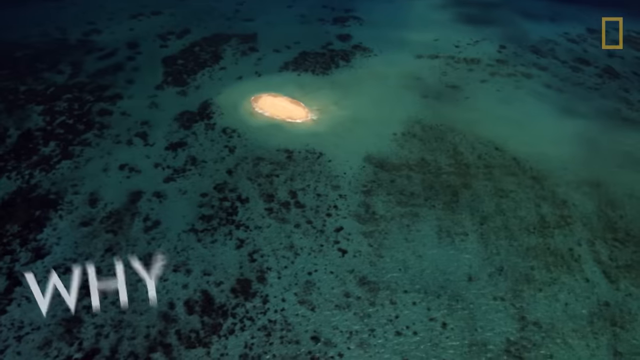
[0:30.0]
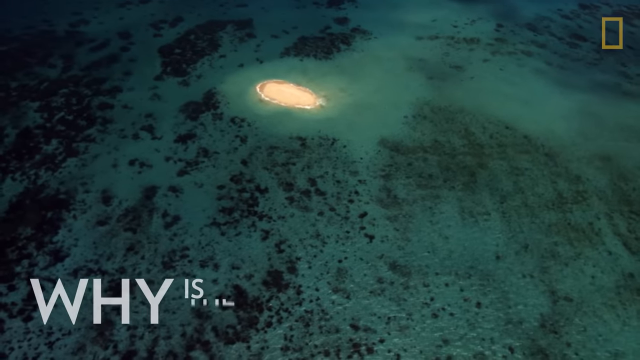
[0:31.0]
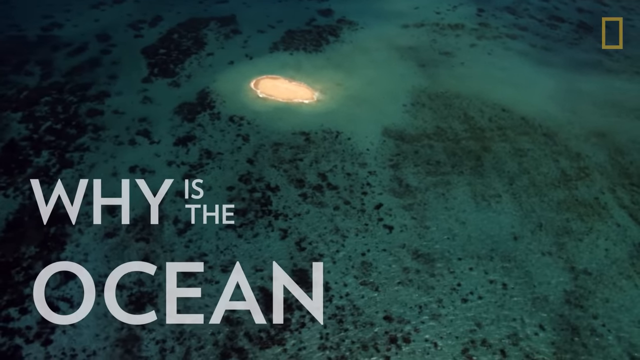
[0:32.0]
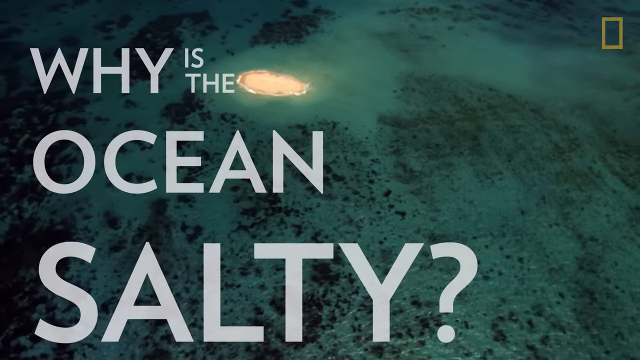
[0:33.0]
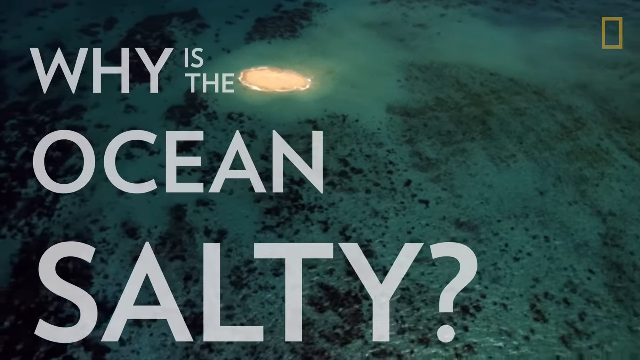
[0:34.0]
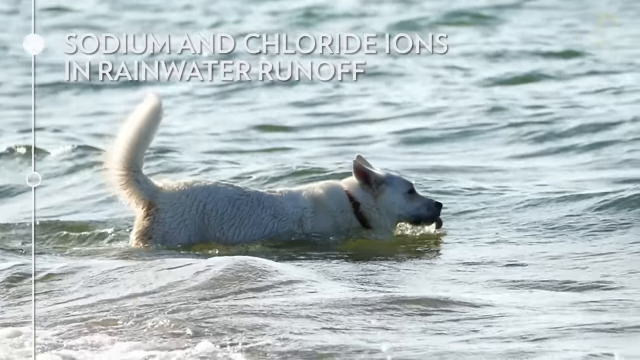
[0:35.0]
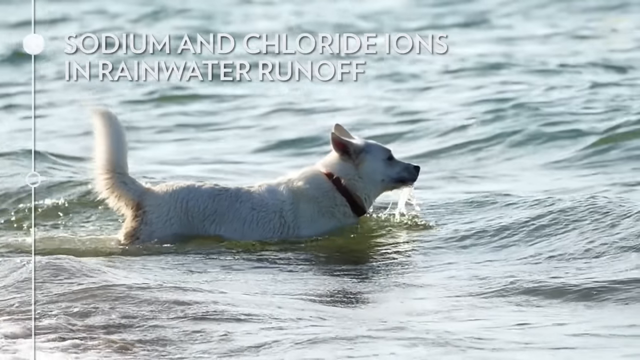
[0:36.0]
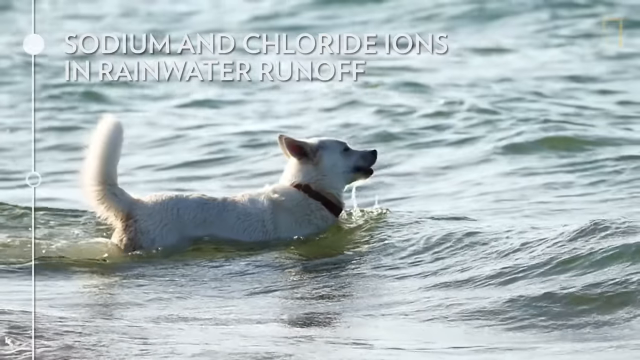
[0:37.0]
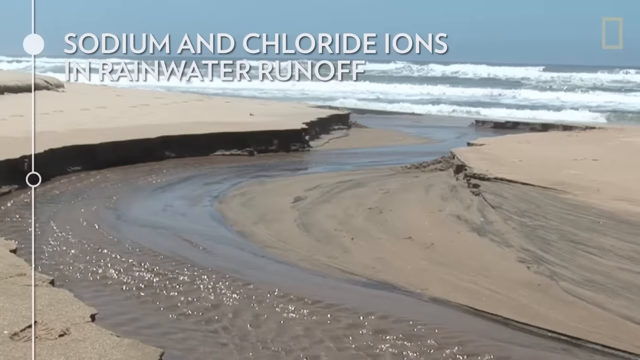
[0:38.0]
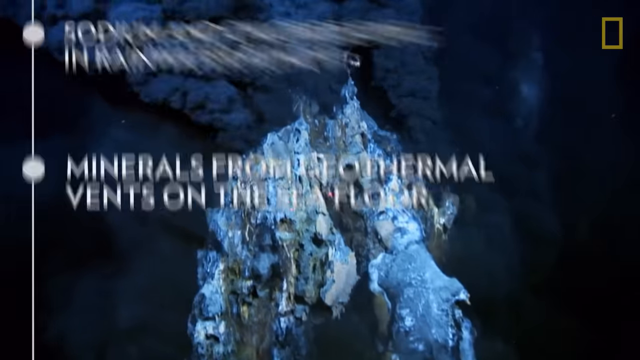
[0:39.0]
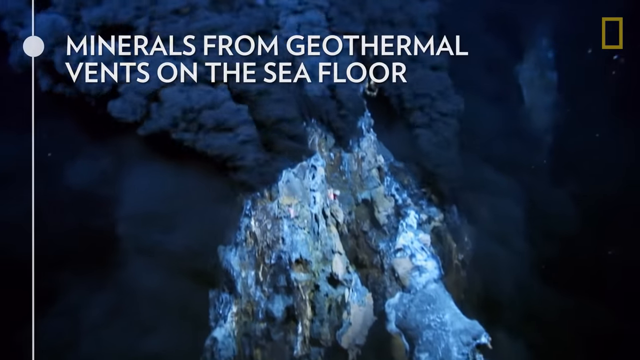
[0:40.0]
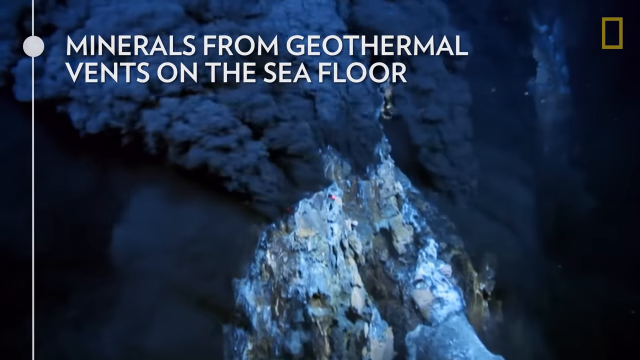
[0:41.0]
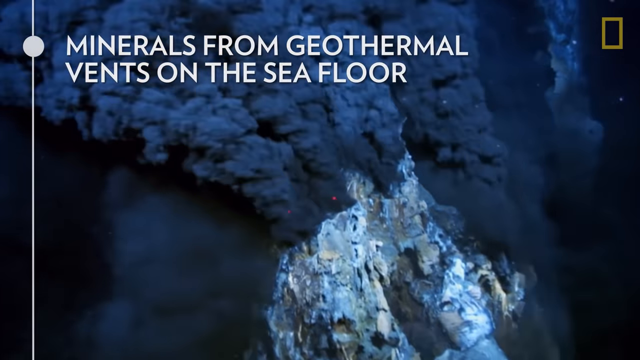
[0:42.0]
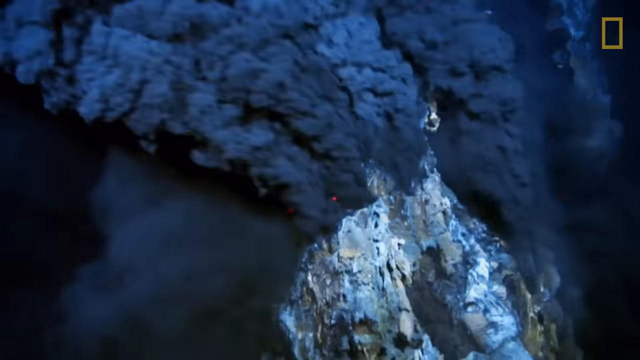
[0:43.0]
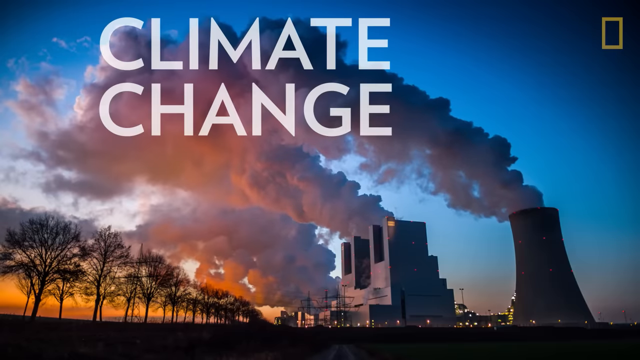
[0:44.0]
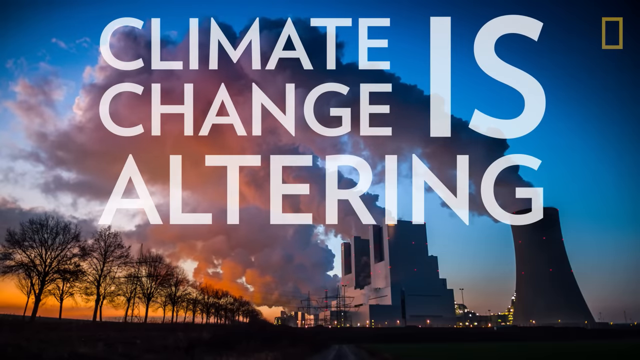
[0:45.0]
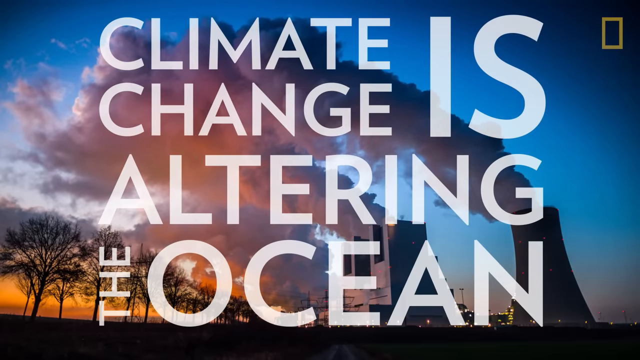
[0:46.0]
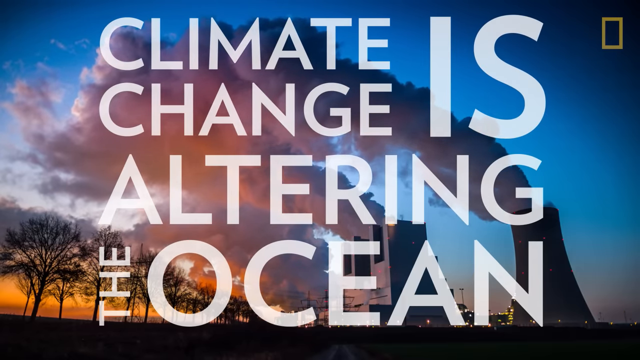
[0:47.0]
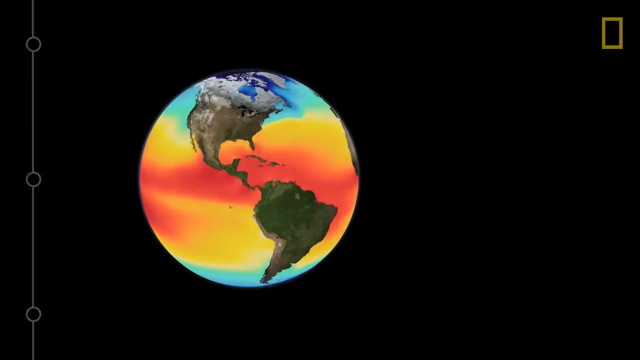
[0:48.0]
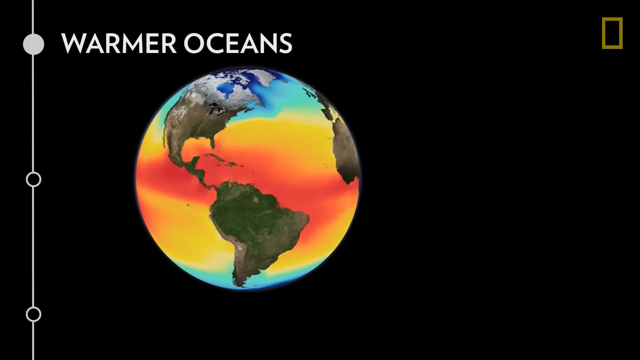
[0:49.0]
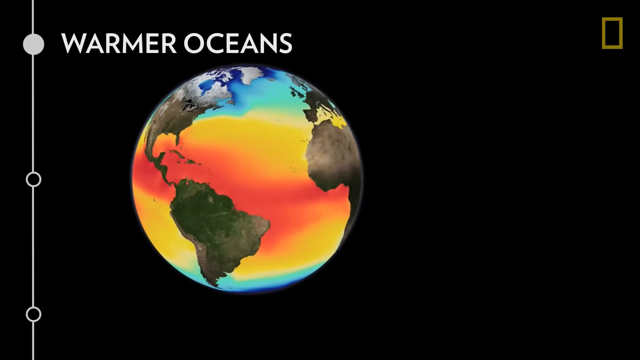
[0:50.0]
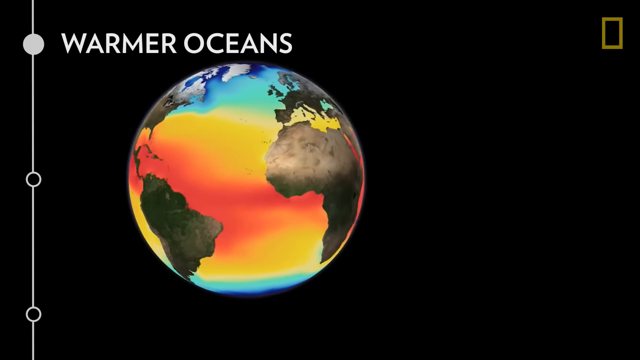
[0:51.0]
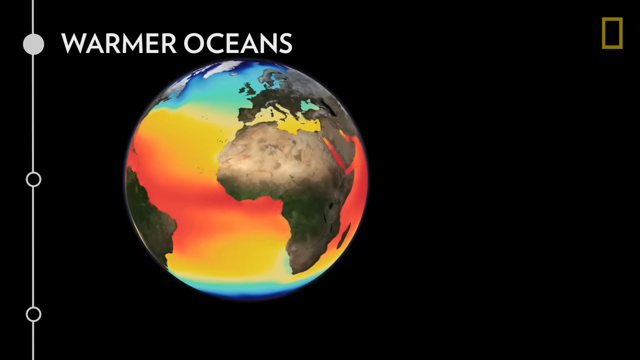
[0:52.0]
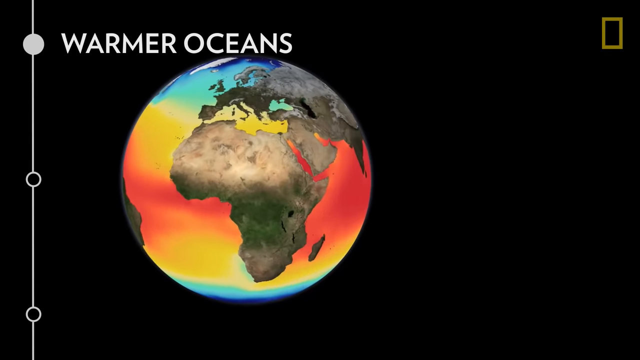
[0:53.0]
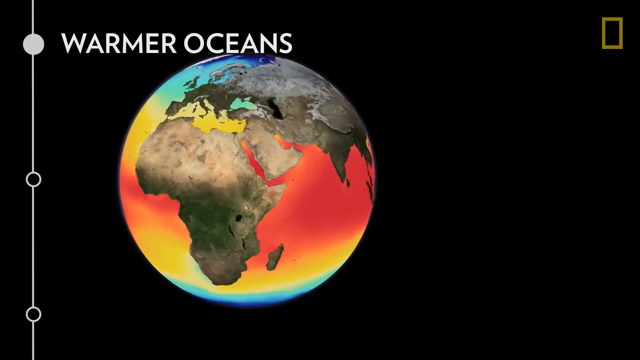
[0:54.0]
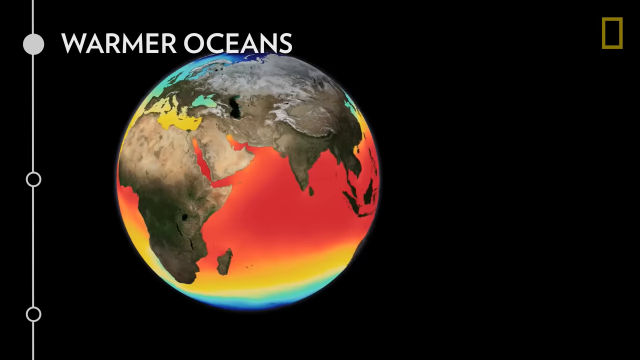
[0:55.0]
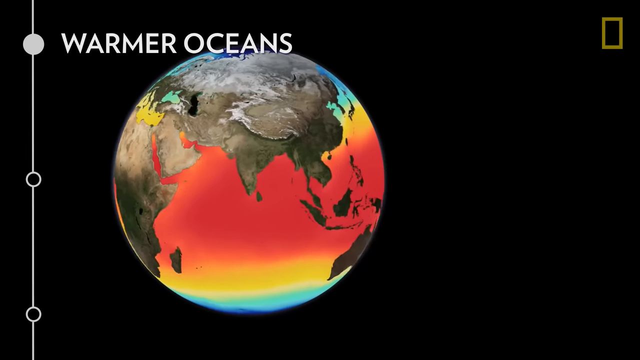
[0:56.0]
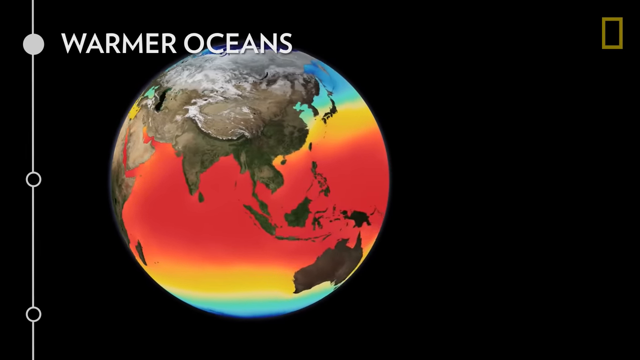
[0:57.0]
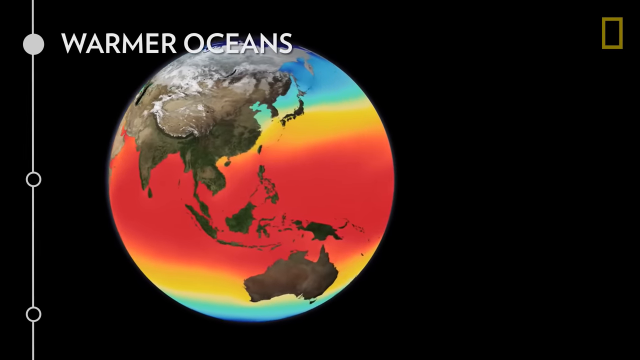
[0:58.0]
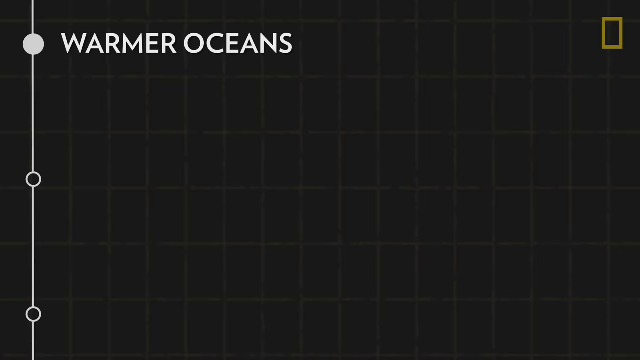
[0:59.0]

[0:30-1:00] A mostly green slide shows the National Geographic logo in the upper right. Words slide up from the bottom in the lower left in gray capital letters: "Why is the ocean salty?" The video then cuts to a white dog with a red collar swimming toward the right through mildly choppy water, its right side visible and its tail up in the air. Text in the upper left reads "Sodium and chloride ions in rainwater runoff." The background then changes while the overlay text stays, showing a valley or small indentation where water has eroded the sand leading to the water in the background, likely the ocean, with a trail of water running through the center. Next comes a shot that is black almost everywhere except for a structure in the middle, either a rock formation or possibly ice, very jagged and irregular looking and white in color.